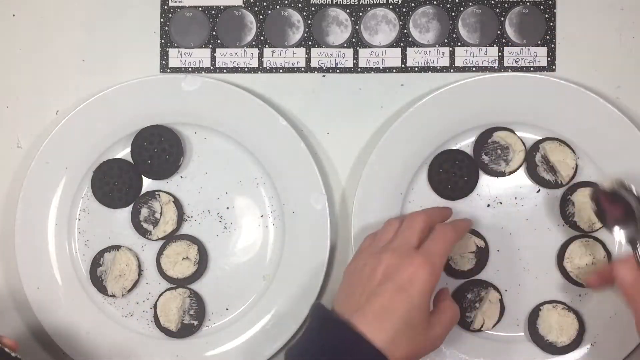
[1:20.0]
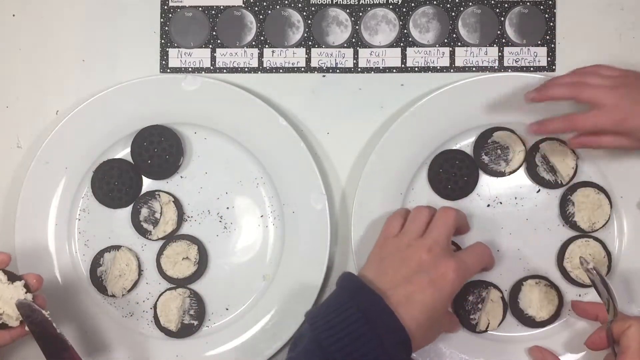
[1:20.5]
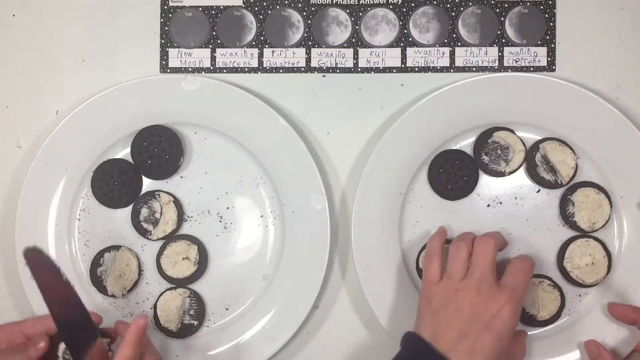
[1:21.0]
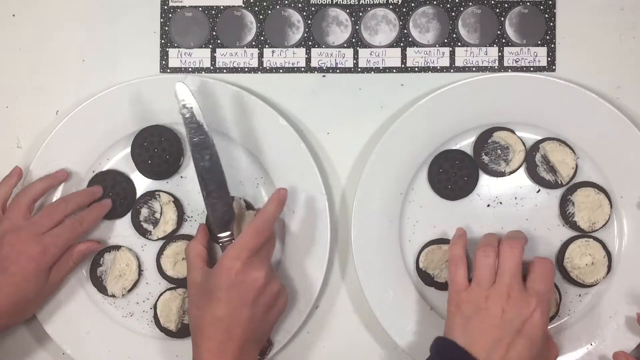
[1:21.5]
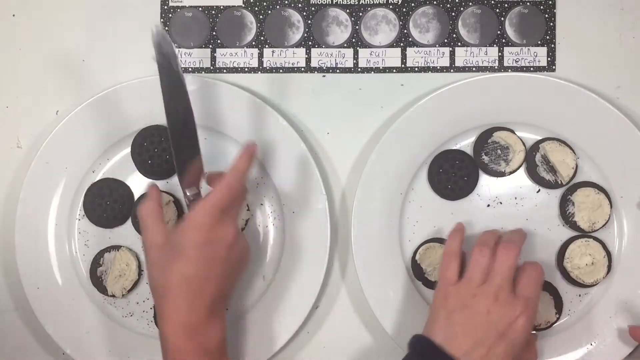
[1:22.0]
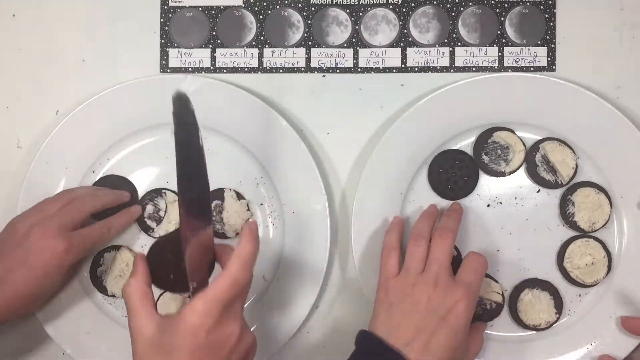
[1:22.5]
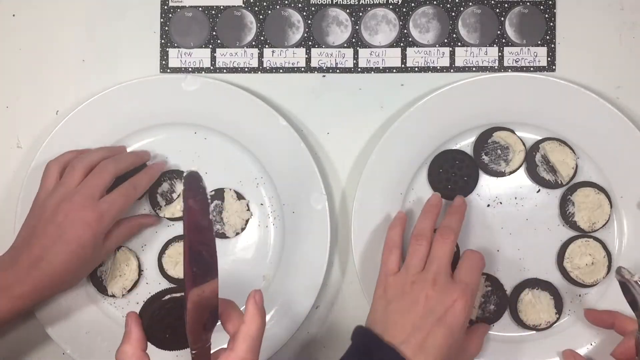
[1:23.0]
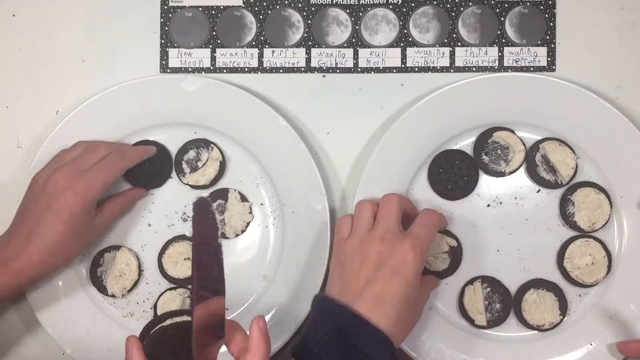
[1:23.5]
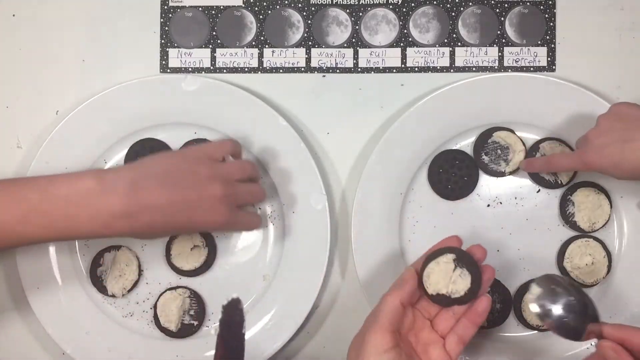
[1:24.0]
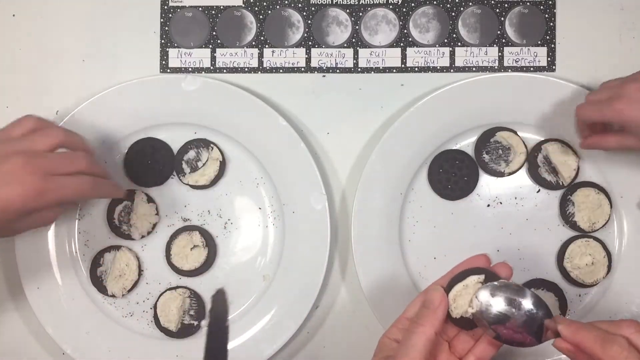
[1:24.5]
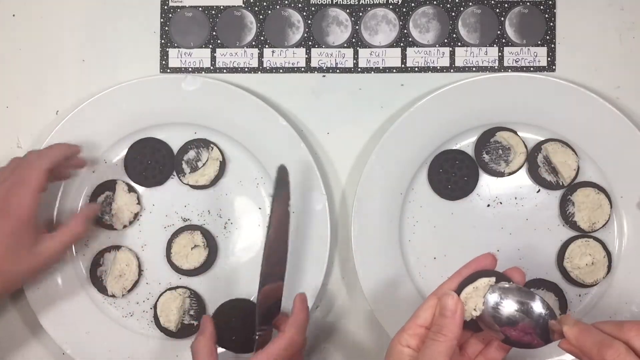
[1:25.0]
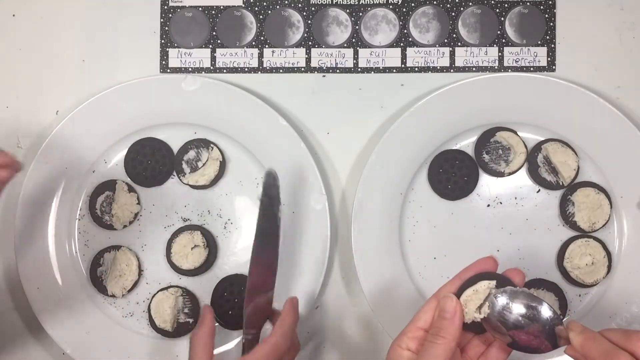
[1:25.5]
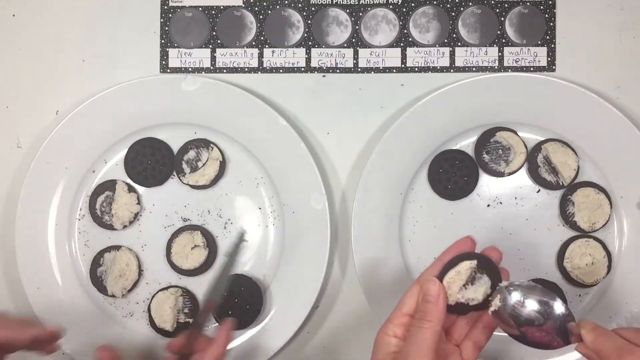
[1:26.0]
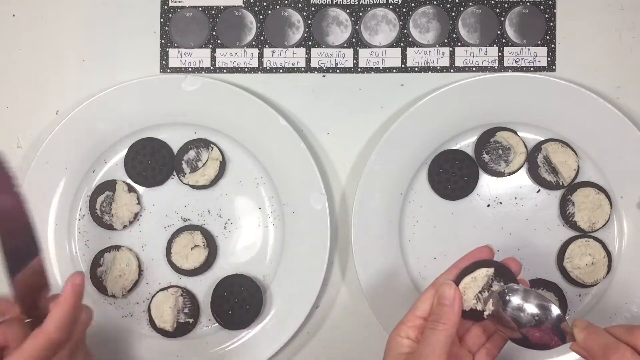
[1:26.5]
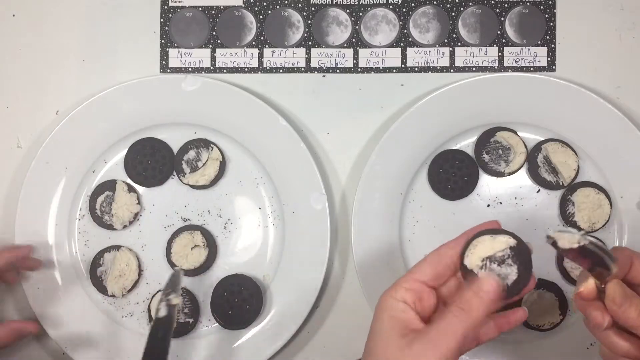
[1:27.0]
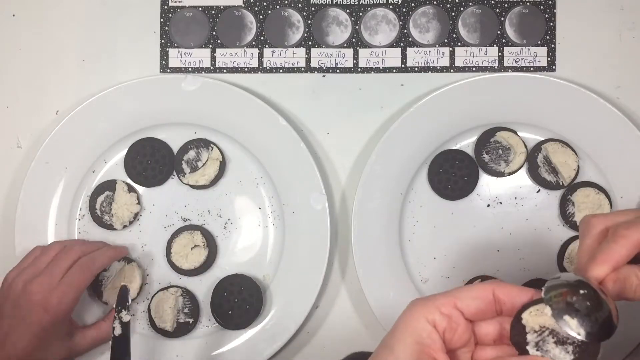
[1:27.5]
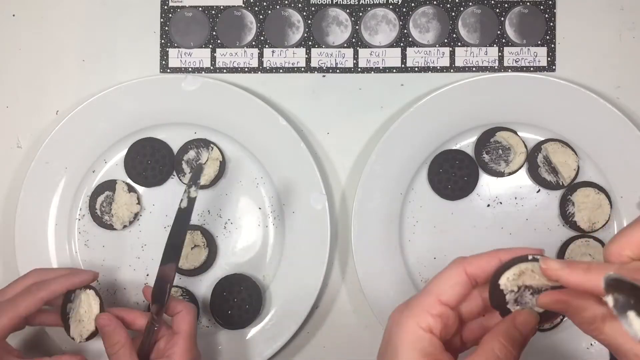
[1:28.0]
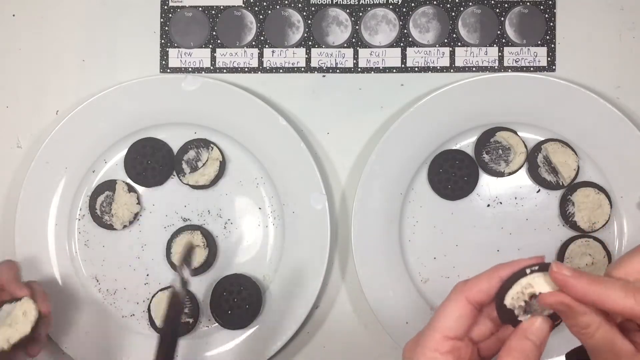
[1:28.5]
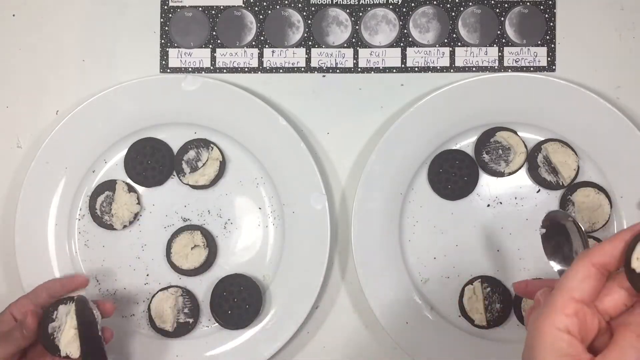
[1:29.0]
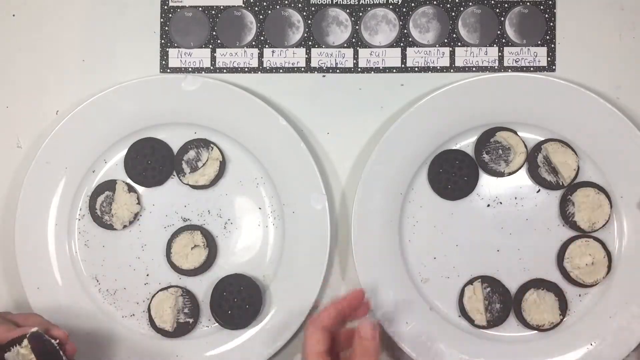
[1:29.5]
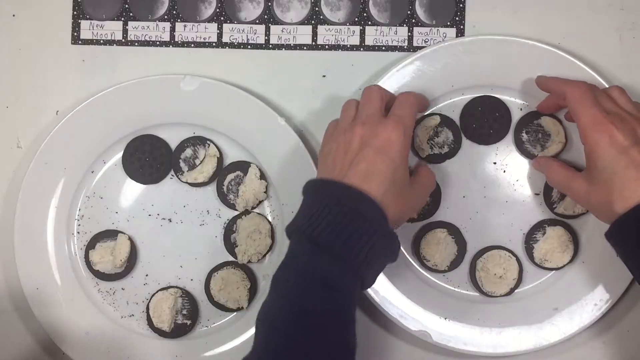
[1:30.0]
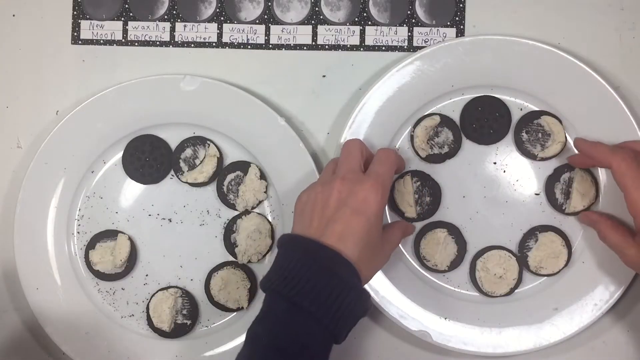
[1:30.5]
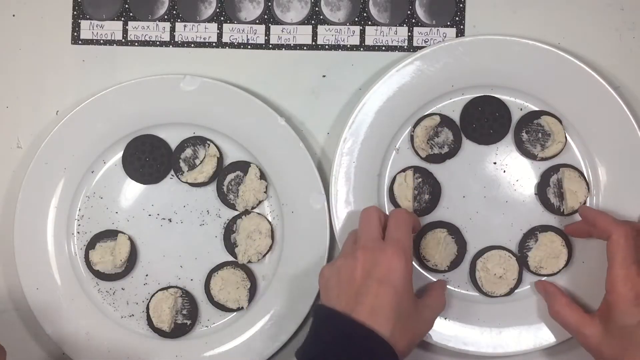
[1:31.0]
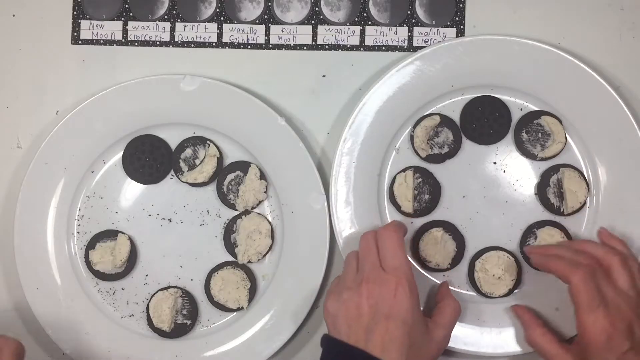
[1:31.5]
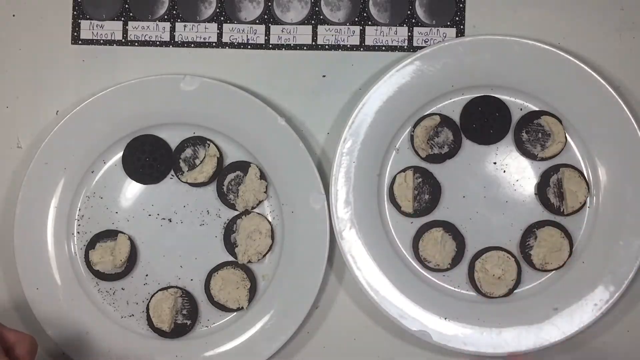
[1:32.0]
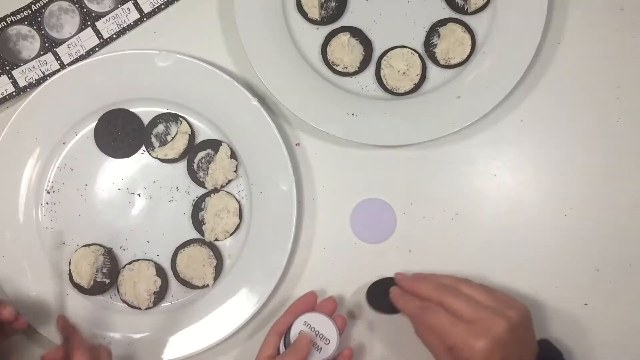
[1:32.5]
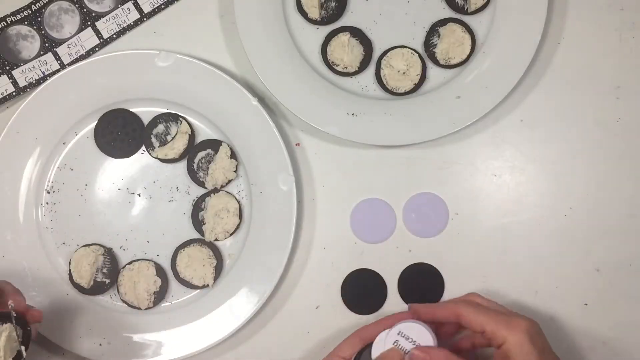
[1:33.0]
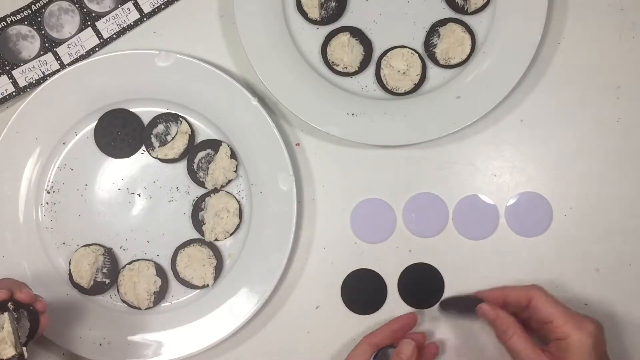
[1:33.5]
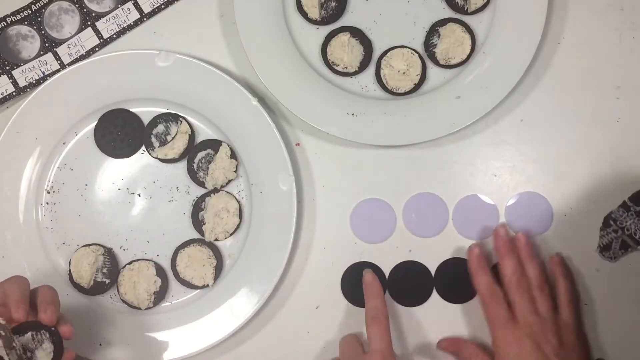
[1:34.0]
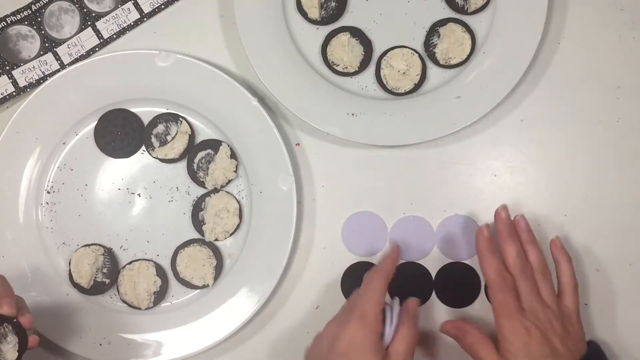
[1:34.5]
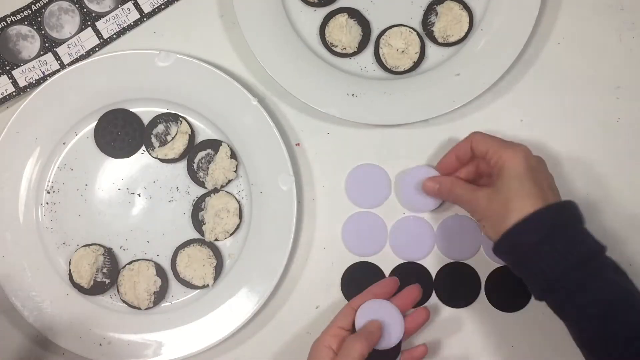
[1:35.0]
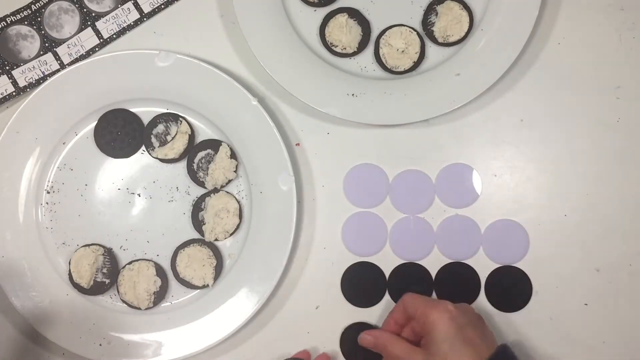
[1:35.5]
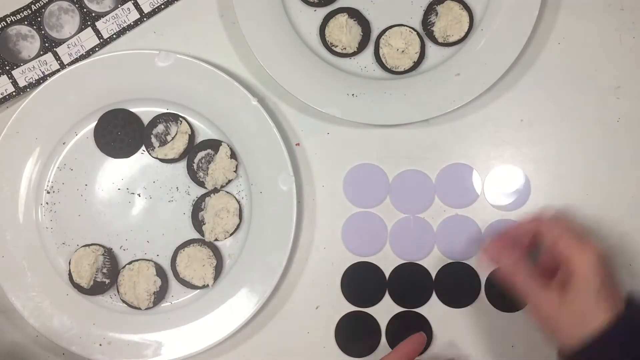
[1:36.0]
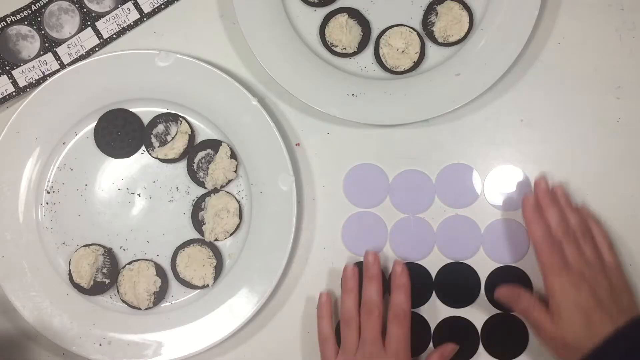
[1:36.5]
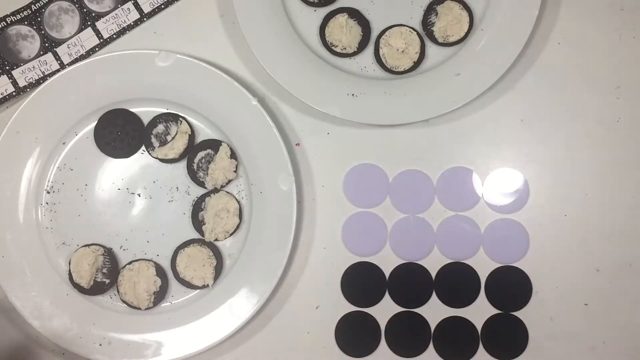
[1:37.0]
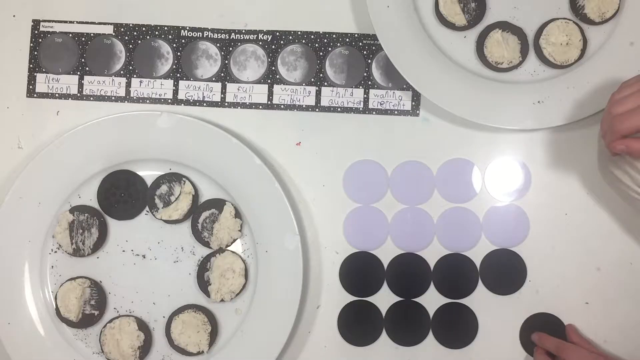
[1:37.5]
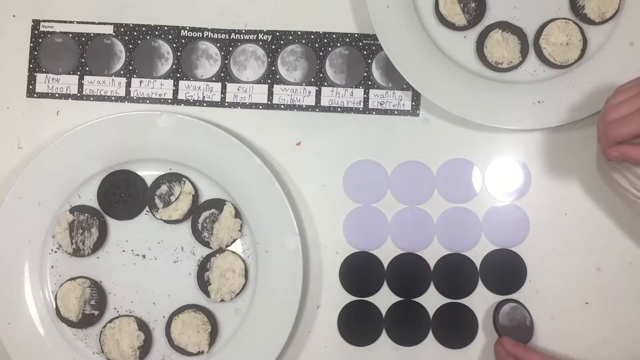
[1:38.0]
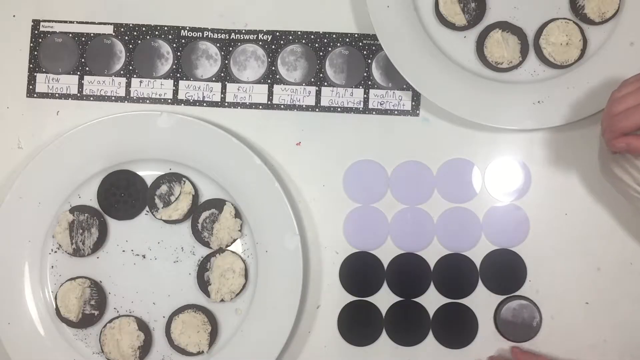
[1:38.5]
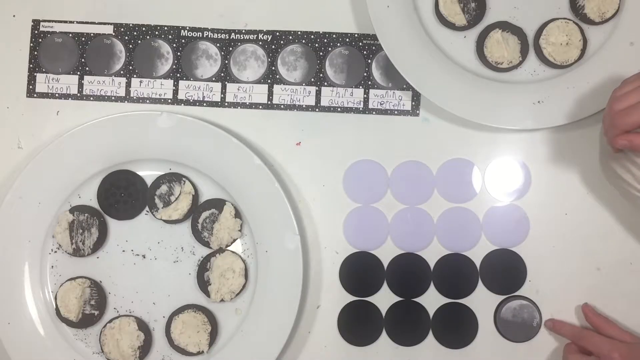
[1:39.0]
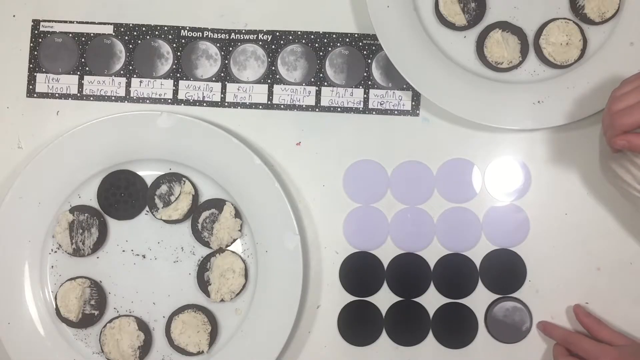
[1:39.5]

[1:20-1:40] The scraping of the cookies continues on the two plates, one on the left and one on the right. The person on the left holds a butter knife in their right hand and a cookie in their left hand, scraping away different amounts of frosting to form the shapes of the moon. The person on the right pushes their cookie plate up toward the top of the screen, and there are now round circles in white, gray and black, arranged in a couple of rows on the table. The circles look shiny, with light reflecting off them, and may be plastic or laminated.